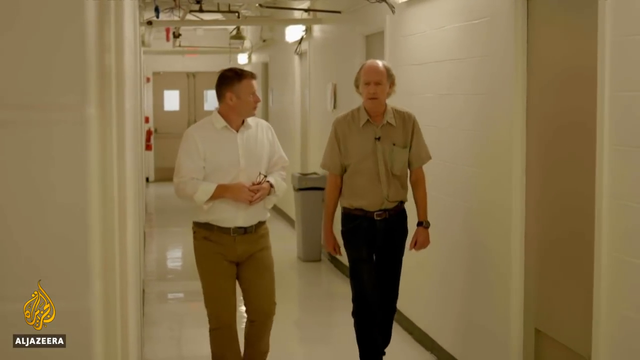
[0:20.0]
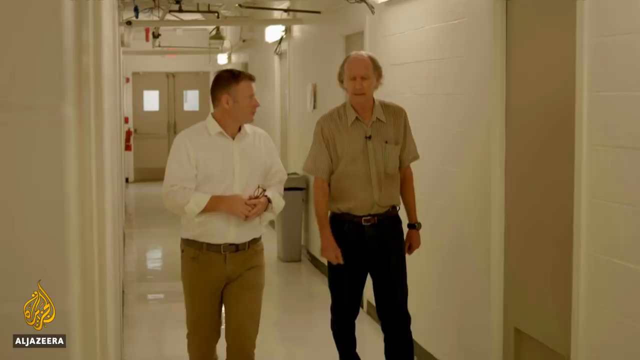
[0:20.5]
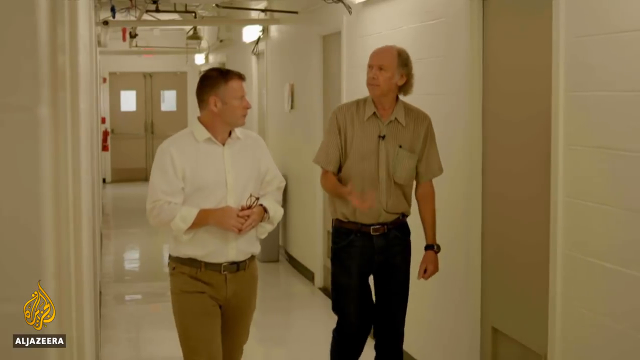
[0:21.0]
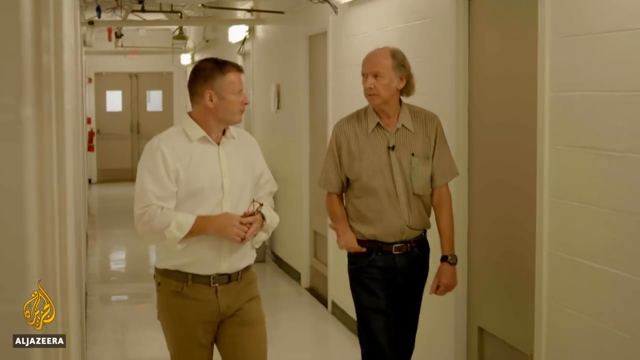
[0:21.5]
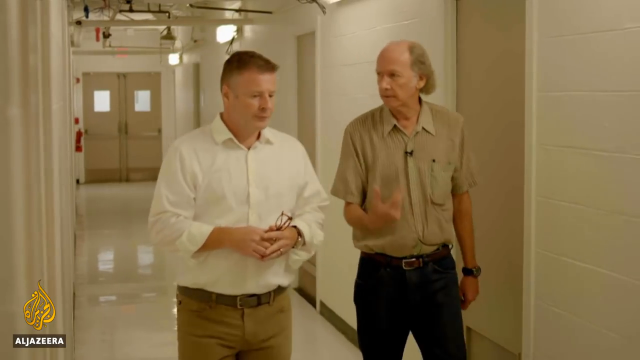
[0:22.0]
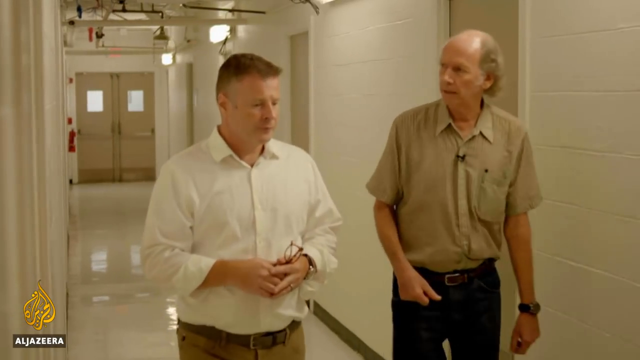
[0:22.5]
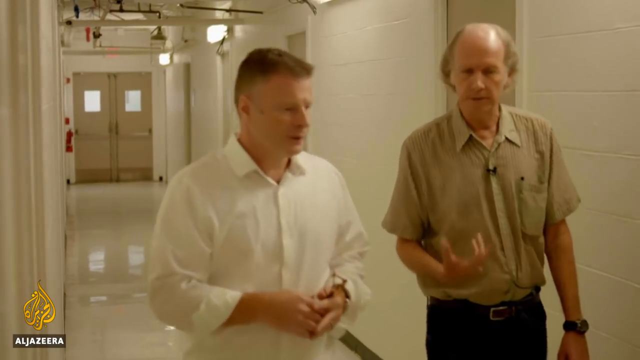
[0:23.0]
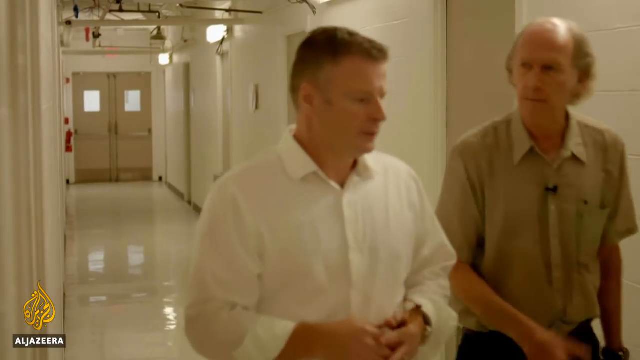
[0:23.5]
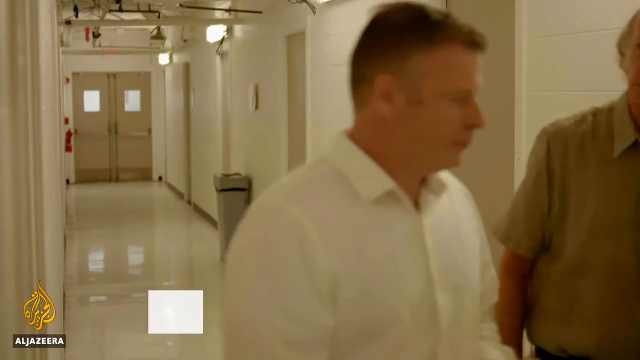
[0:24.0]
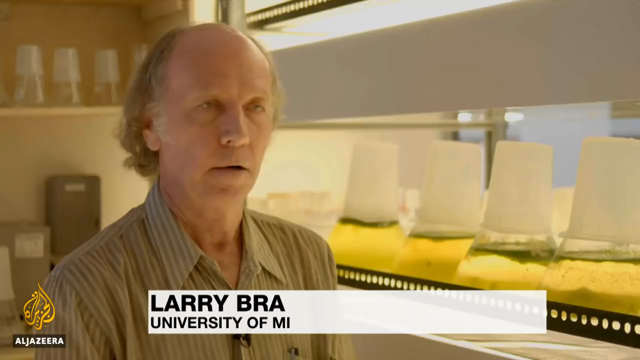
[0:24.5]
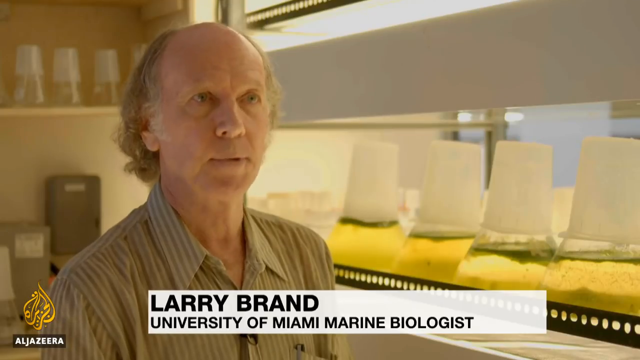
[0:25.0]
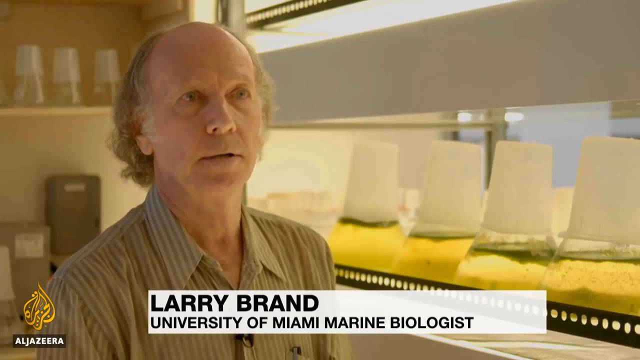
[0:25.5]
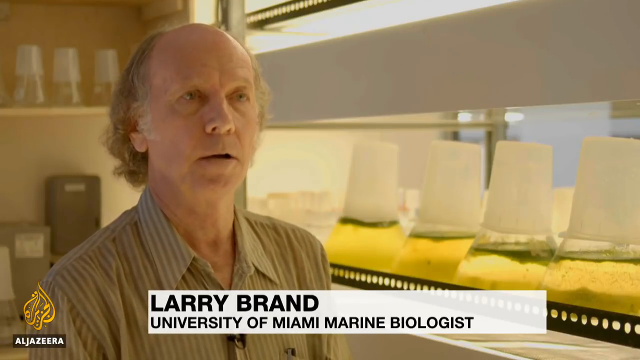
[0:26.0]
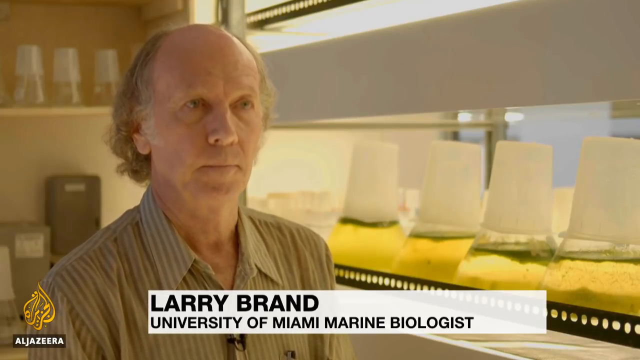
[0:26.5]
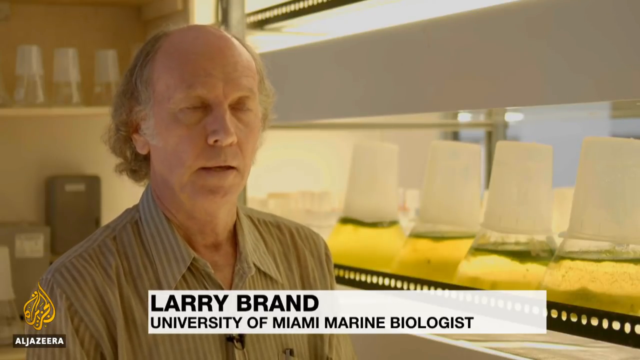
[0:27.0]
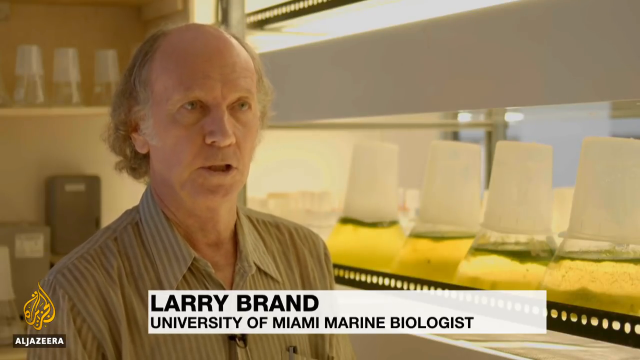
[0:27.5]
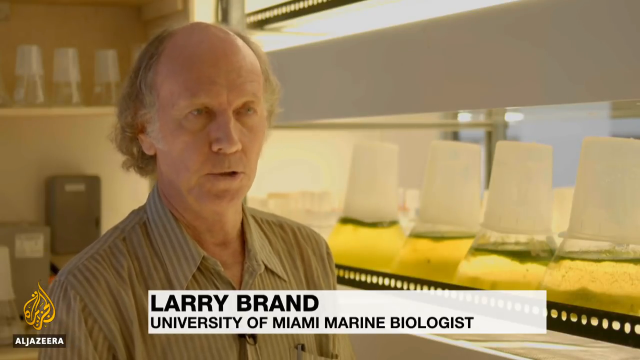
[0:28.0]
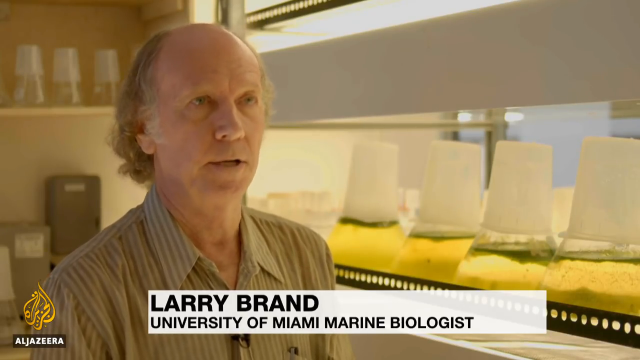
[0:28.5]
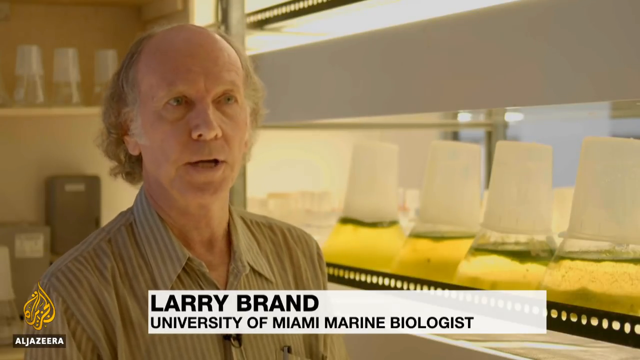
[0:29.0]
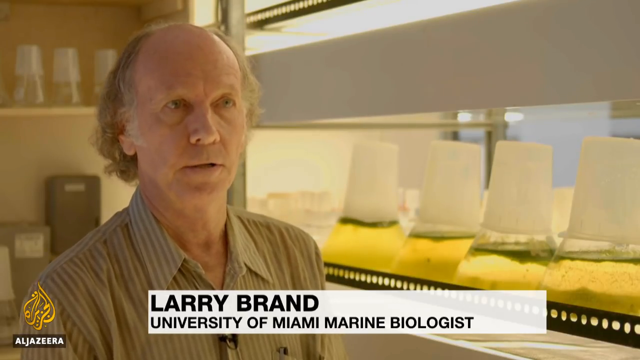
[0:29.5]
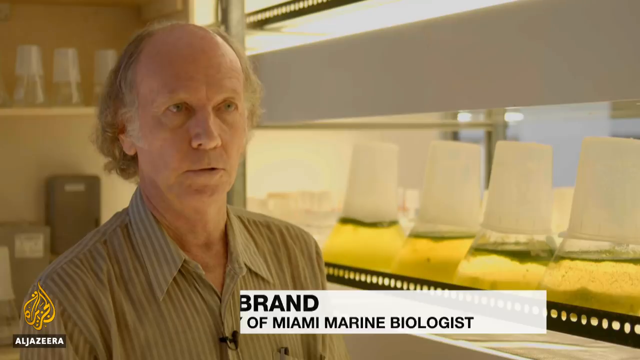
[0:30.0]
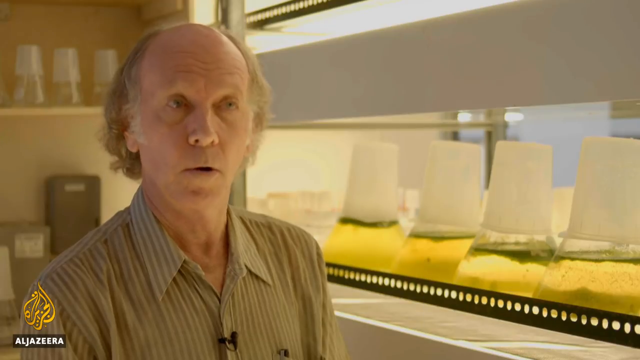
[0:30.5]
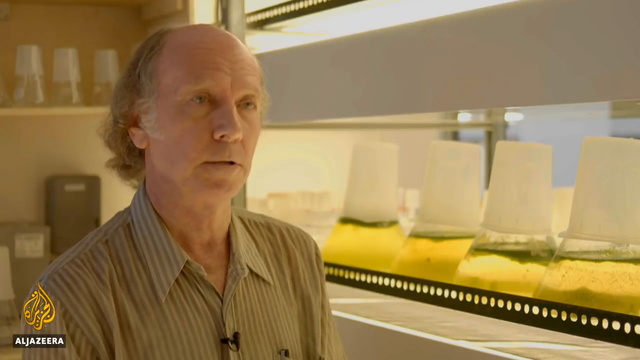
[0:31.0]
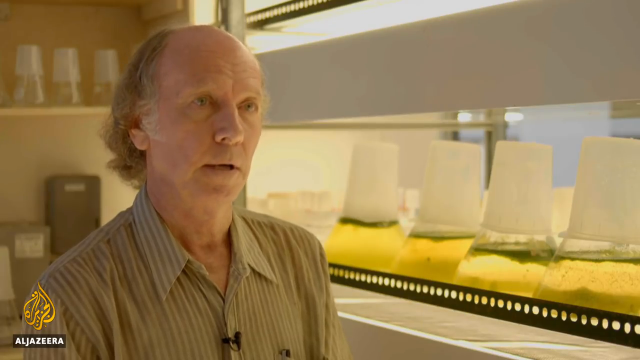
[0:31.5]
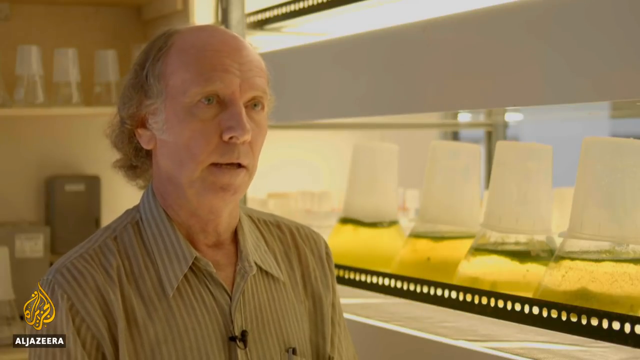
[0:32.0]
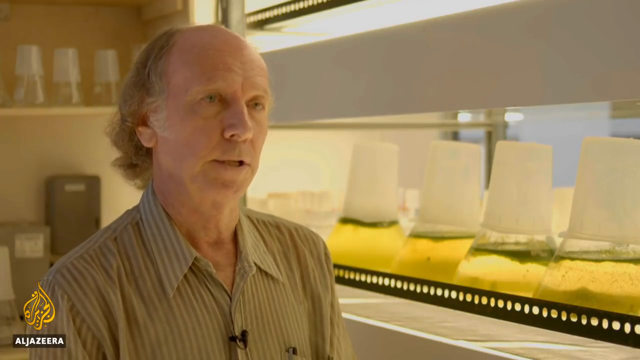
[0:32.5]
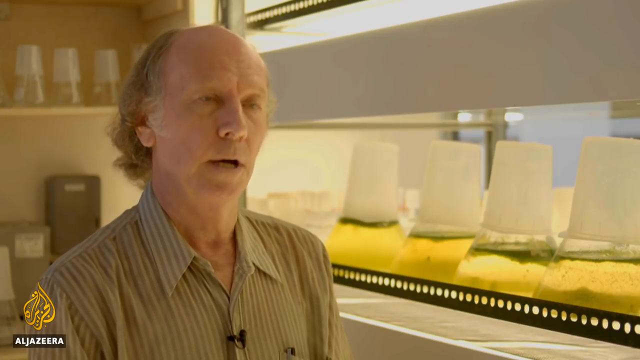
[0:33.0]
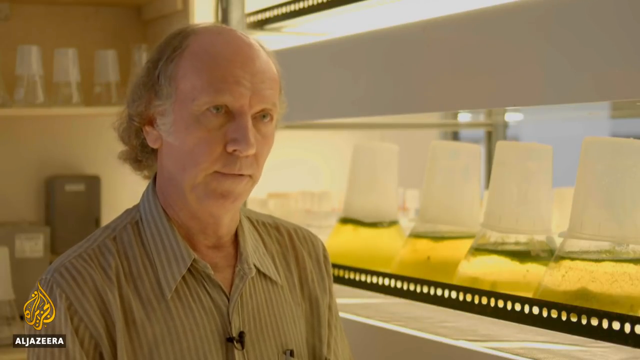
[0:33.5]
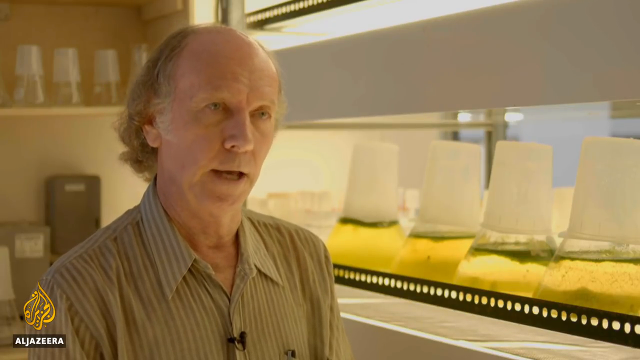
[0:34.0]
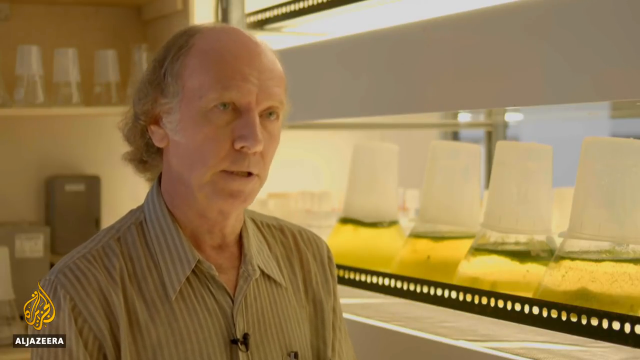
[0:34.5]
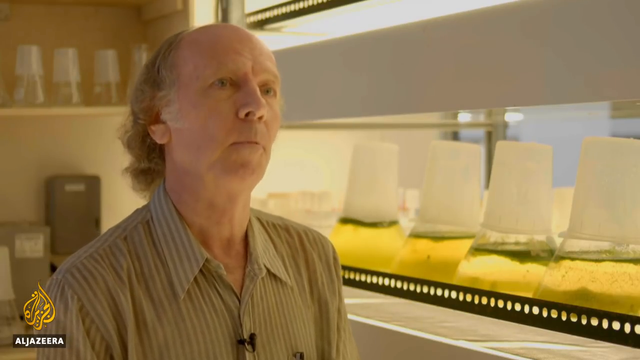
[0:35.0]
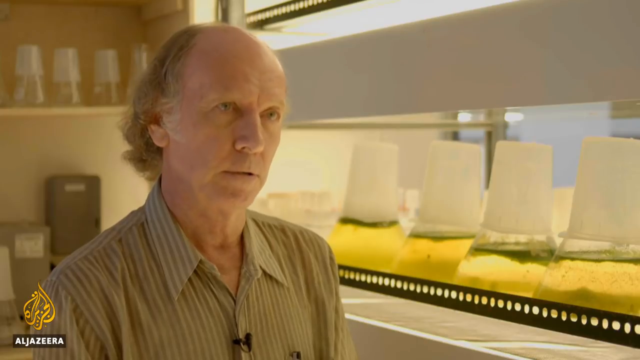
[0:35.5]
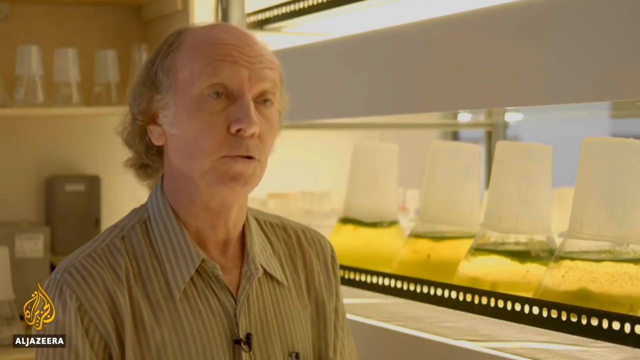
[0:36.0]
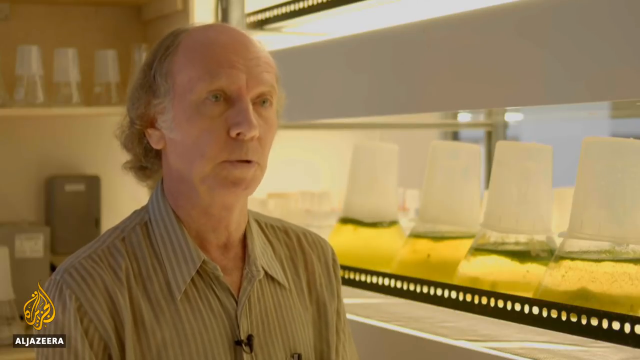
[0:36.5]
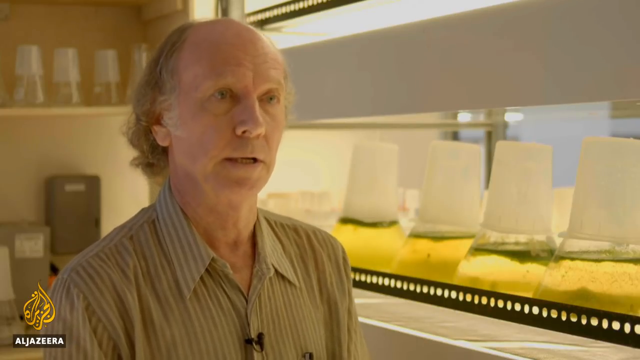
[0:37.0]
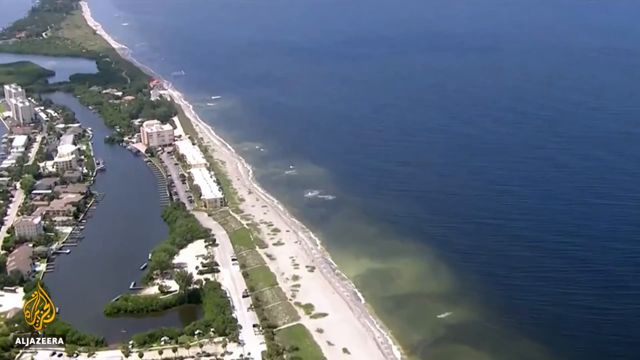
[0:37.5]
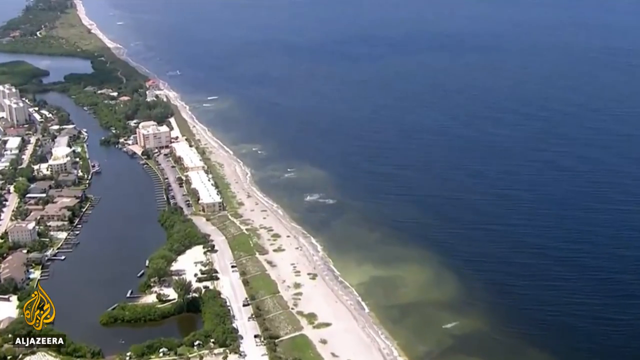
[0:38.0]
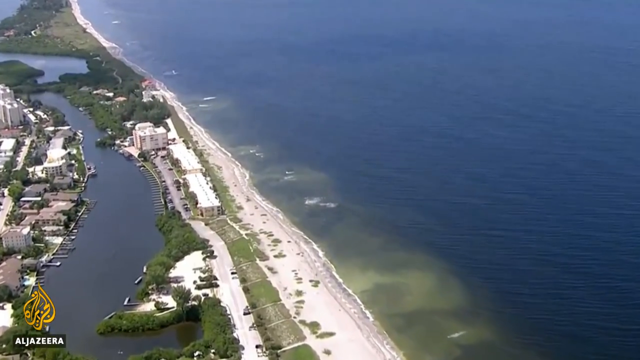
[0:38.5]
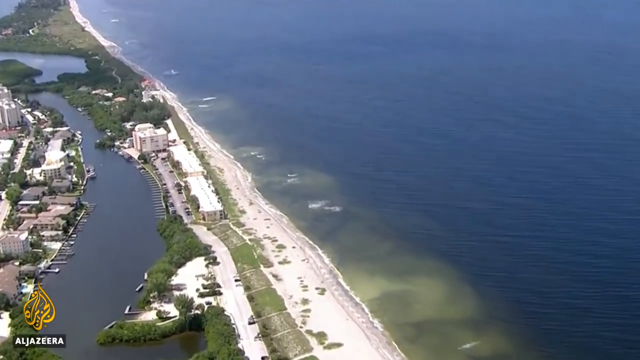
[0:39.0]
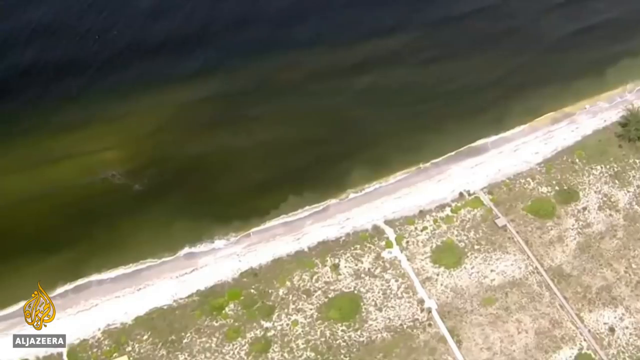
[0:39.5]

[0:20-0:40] The two men walk down the hallway toward the camera, apparently talking. The balder man looks at the man on the viewer's left, gesturing at him intently with his hand. The video cuts to the bald man sitting on the left side of the frame, somewhat angled, with beakers and equipment behind him. He is identified as Larry Brand, a University of Miami marine biologist. He talks and blinks very slowly. An Al Jazeera logo is in the bottom left corner. Next comes an aerial shot of a coastline: on the right are large open waterways and beaches with a couple of white townhouses in the background, and on the left is a small waterway and more houses, like hotels, as the view moves farther in. A very brief shot follows of what looks like undeveloped land with beachfront property.